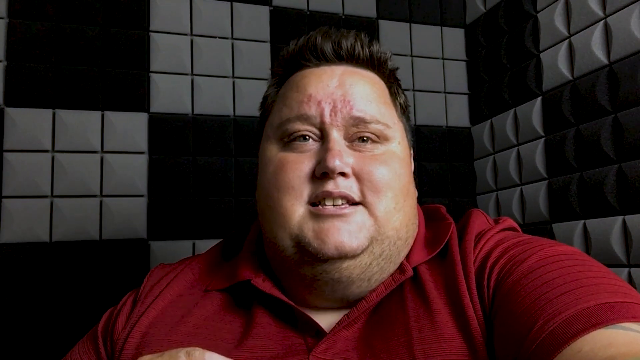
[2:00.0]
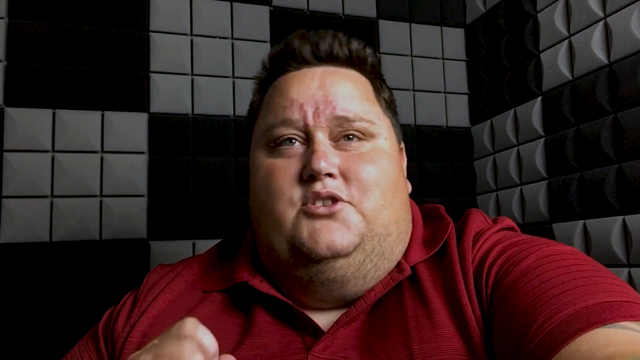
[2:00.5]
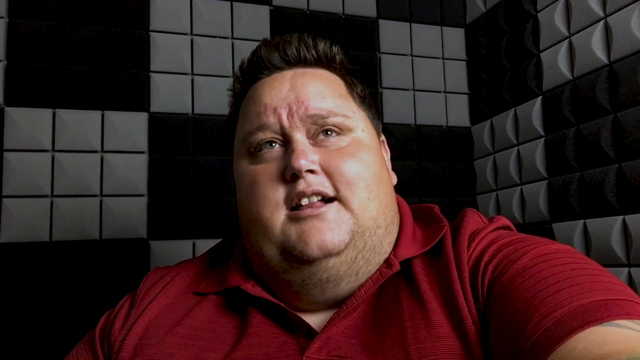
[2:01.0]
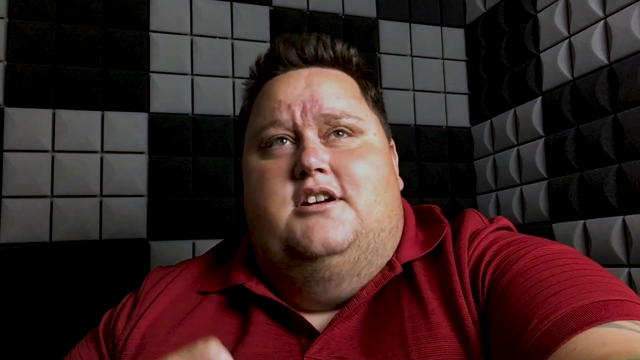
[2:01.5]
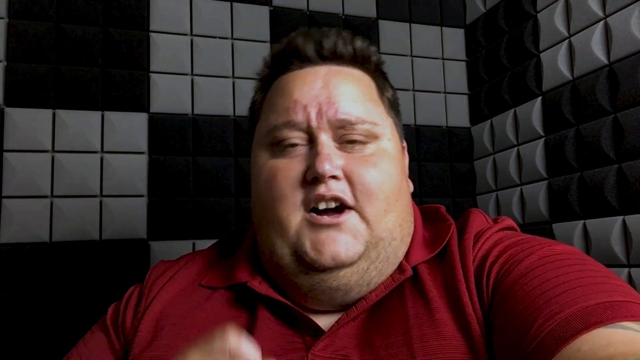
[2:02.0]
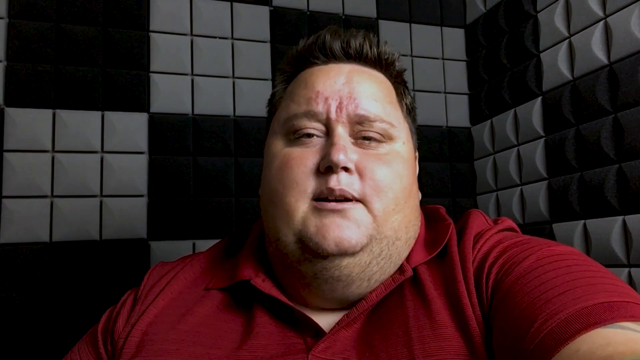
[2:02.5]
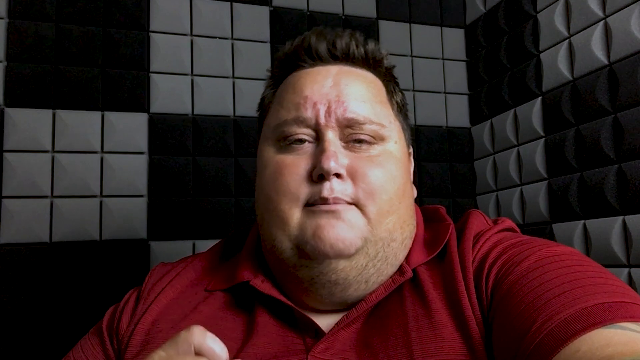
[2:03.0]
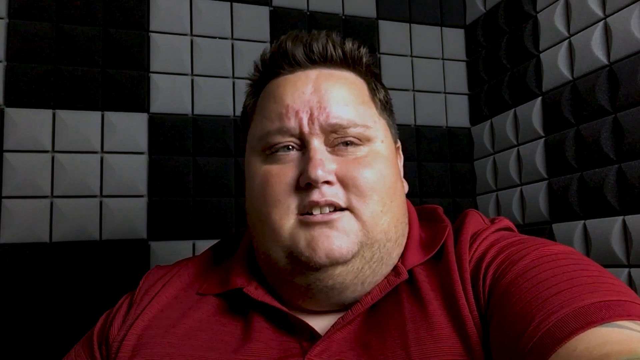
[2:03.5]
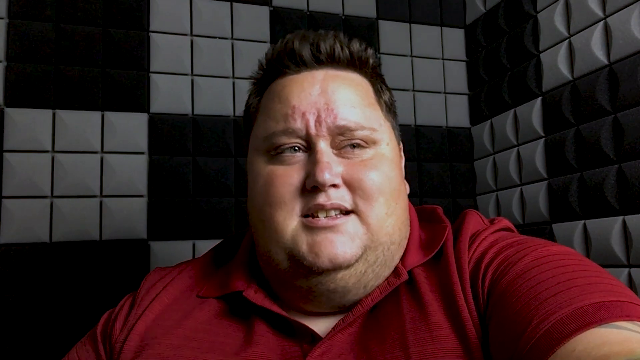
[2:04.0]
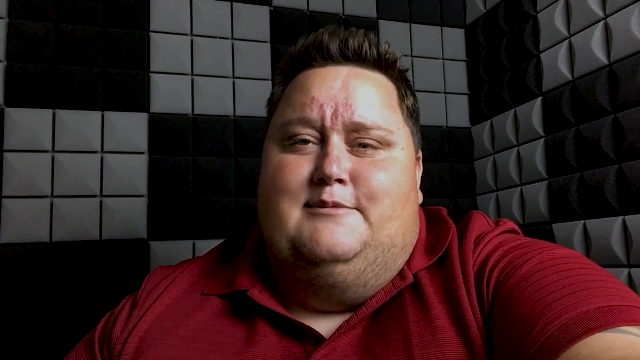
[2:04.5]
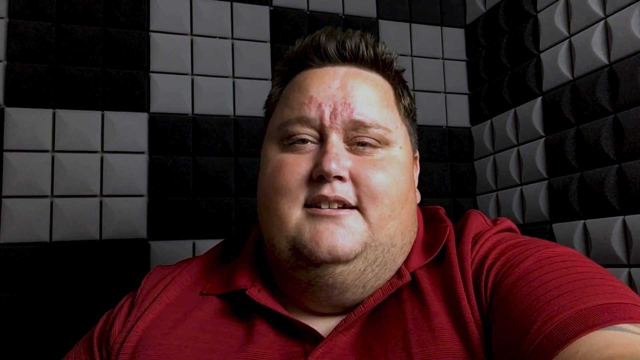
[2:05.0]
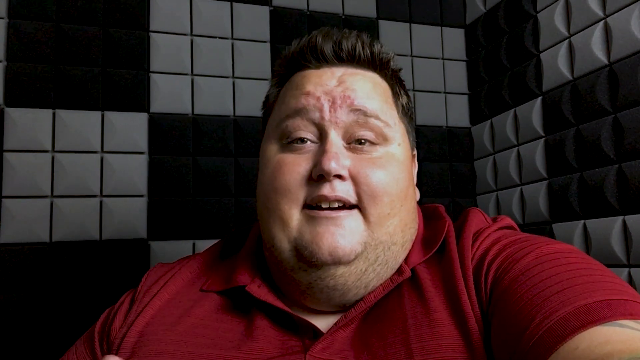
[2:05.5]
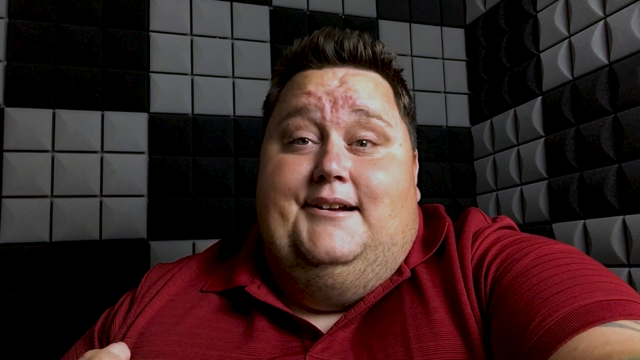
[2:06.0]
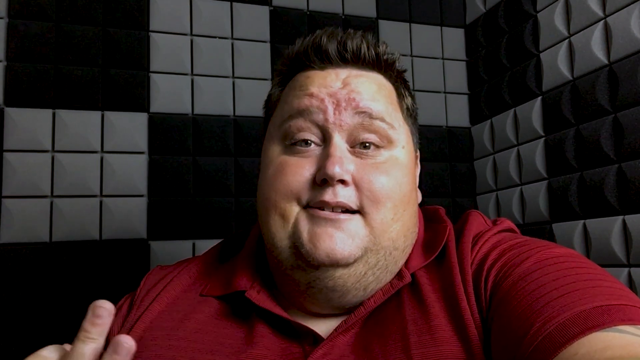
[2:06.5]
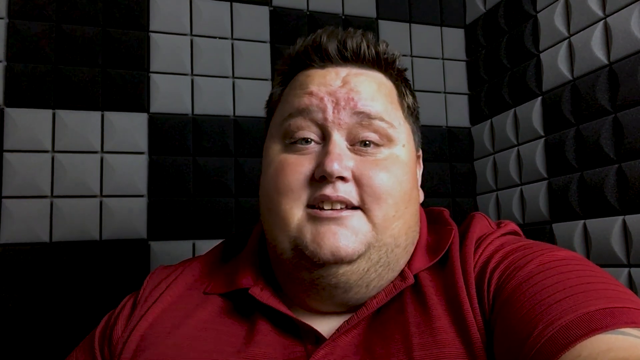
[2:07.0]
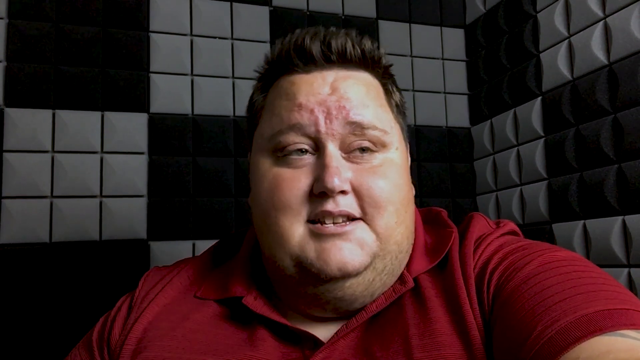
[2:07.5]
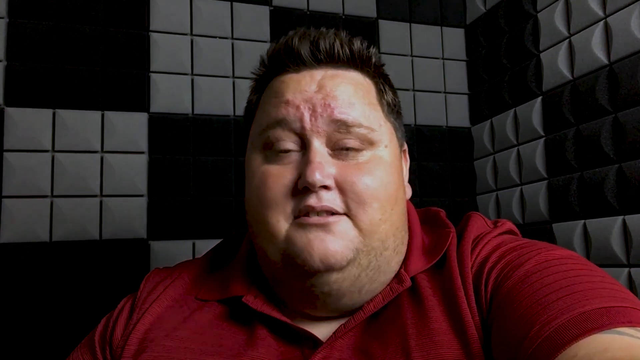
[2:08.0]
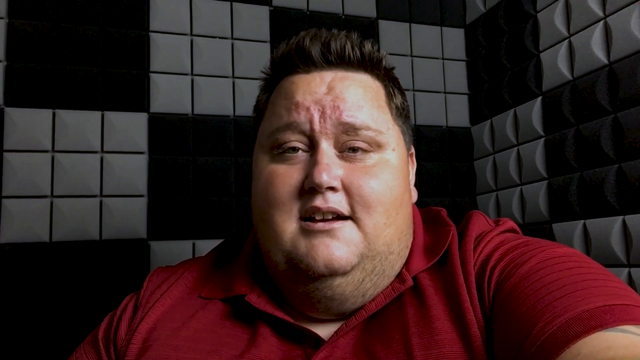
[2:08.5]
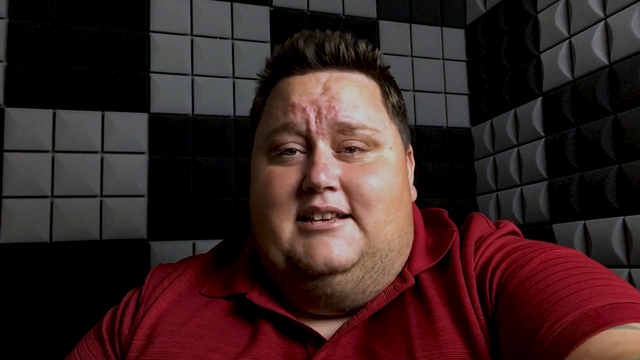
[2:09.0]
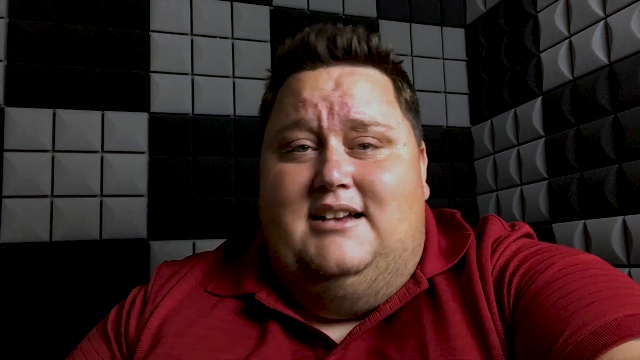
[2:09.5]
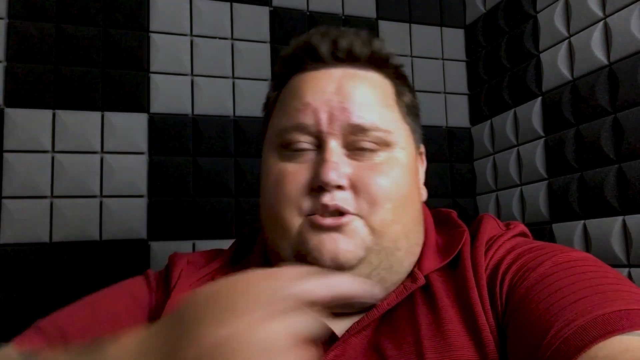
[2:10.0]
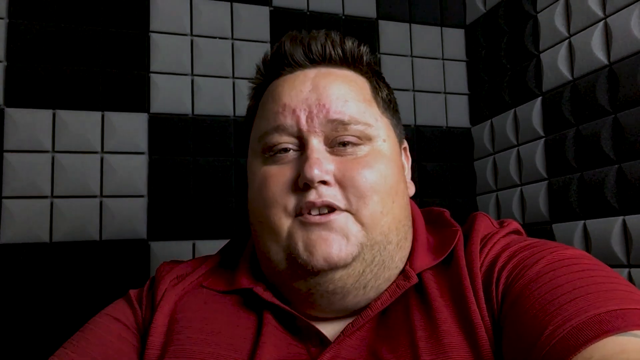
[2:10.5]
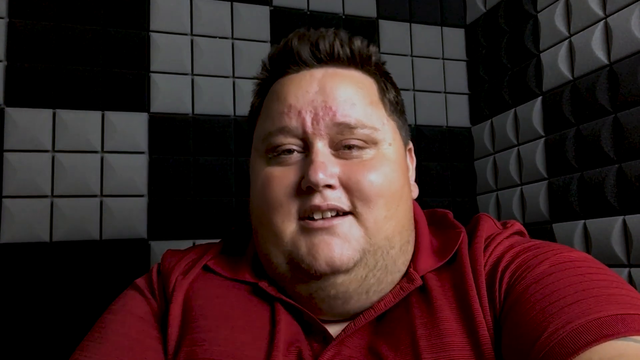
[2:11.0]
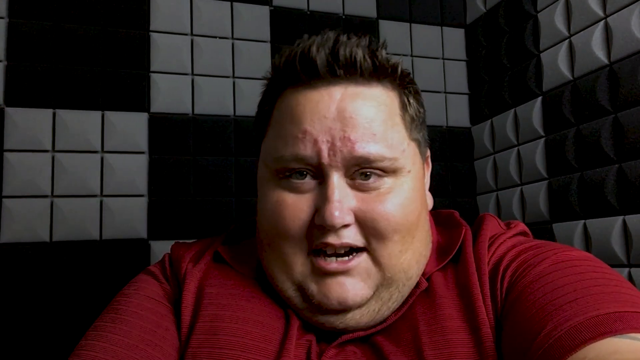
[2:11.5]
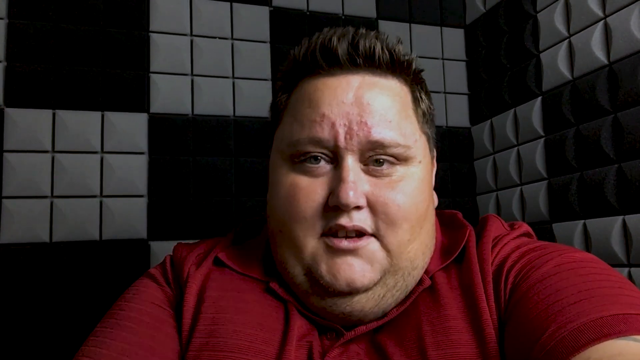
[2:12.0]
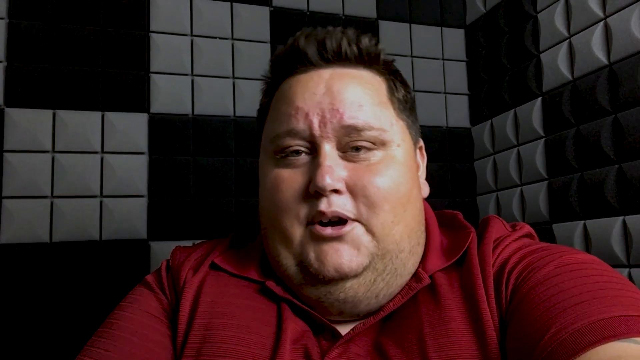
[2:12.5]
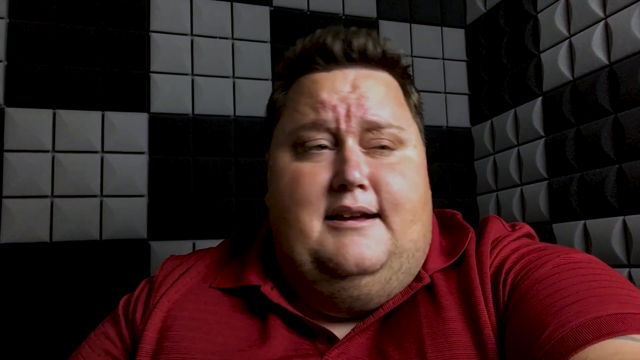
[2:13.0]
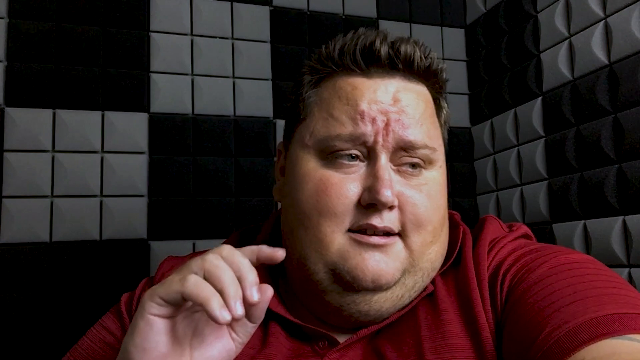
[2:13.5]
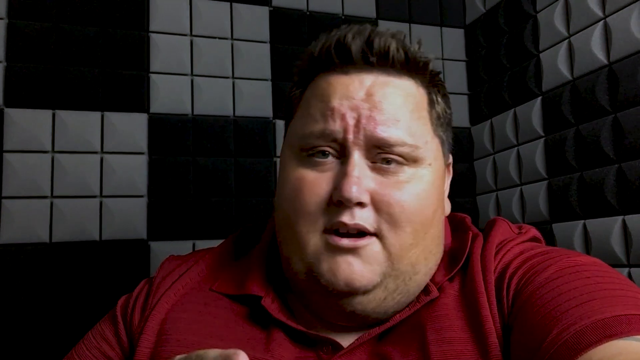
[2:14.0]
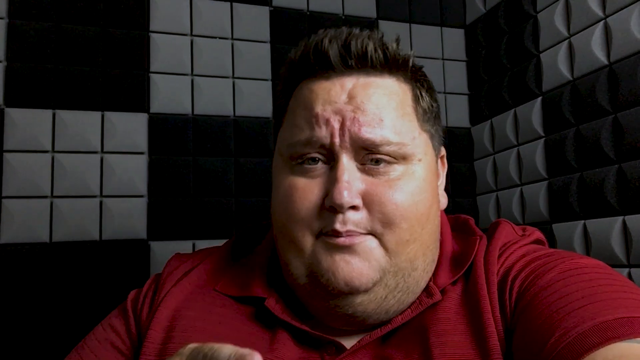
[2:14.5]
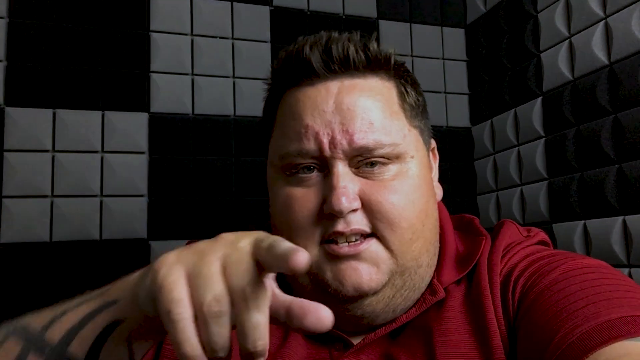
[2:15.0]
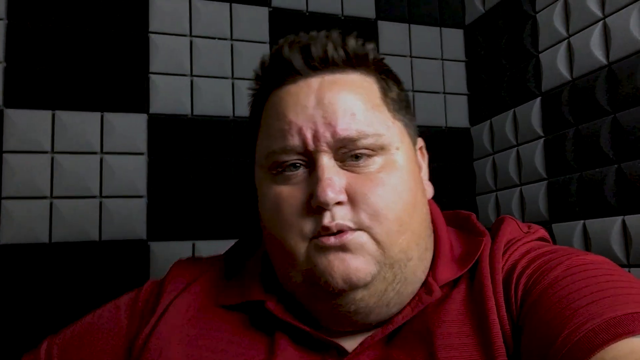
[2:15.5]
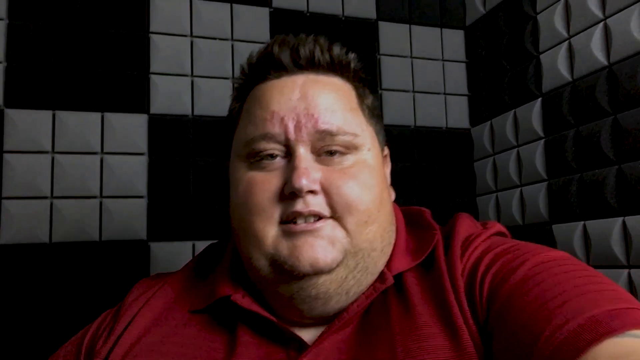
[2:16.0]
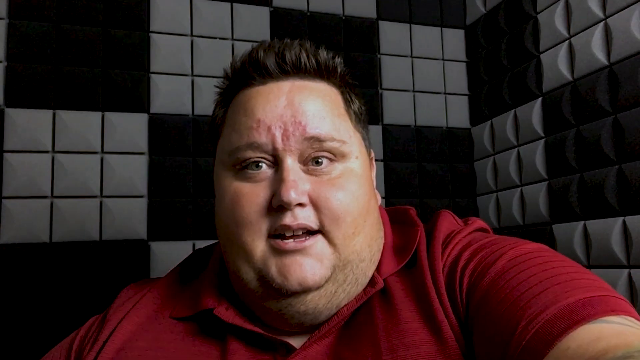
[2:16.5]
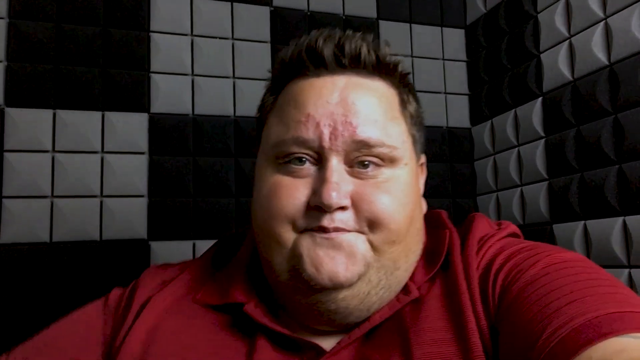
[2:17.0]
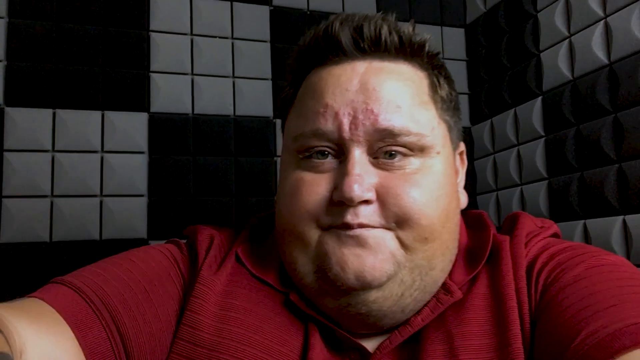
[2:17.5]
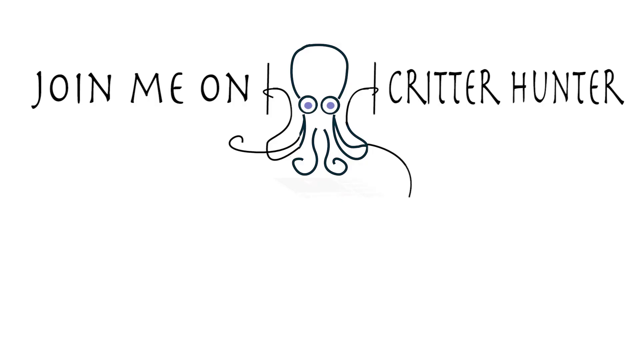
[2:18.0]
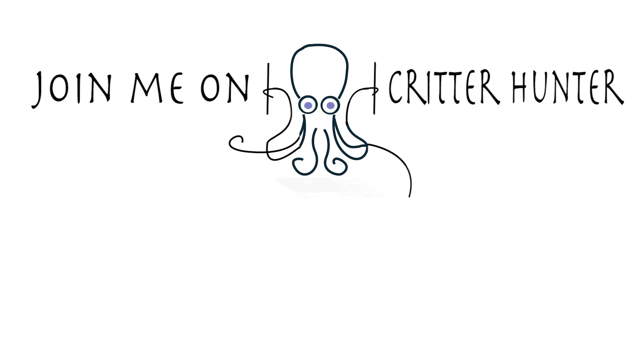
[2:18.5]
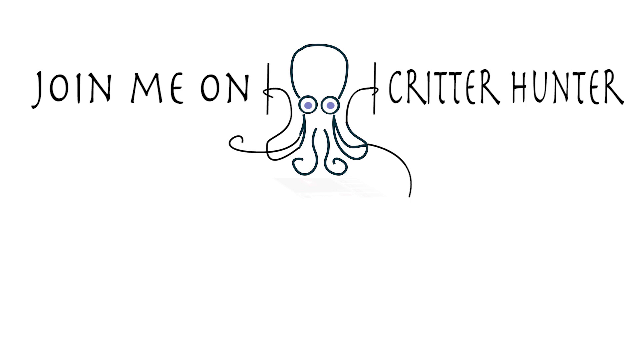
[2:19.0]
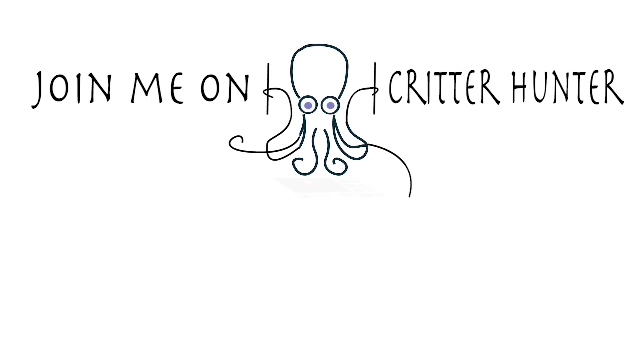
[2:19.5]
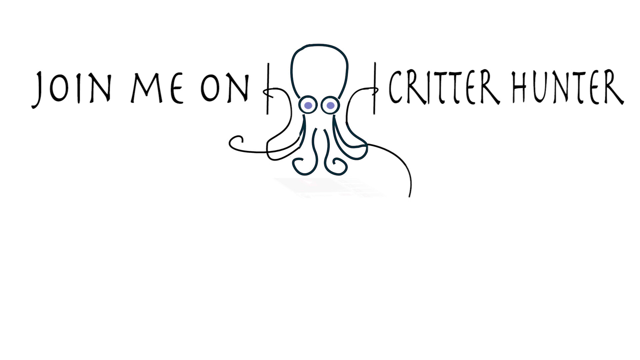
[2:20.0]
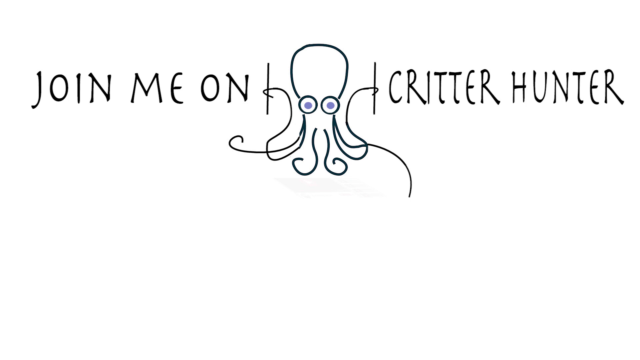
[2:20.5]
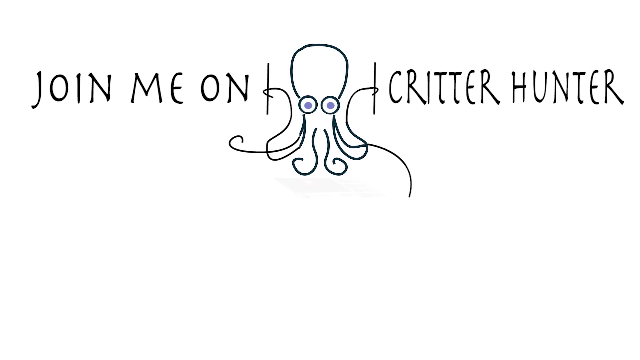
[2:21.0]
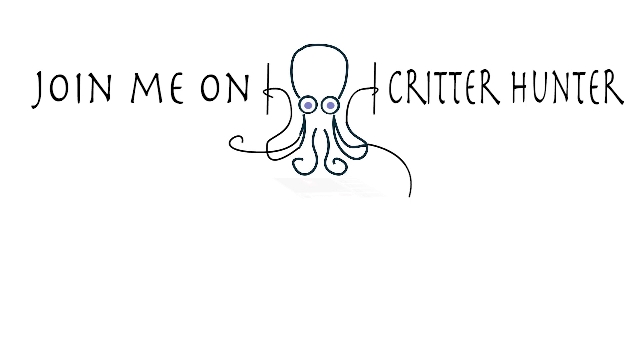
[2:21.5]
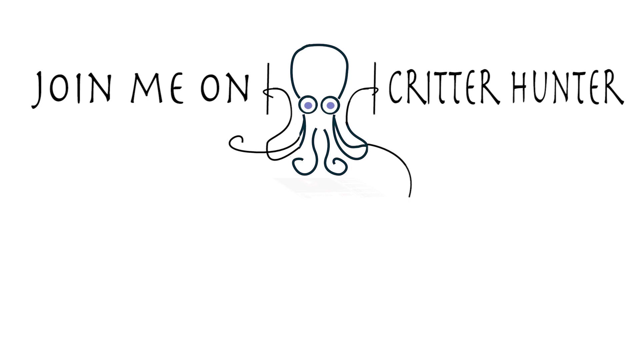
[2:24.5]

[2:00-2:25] The obese man is seated in a crumpled-looking red t-shirt, gesticulating with one hand. The background is a checkered pattern of big black and gray tiles, with each gray tile broken into 9 smaller gray tiles outlined in black lines. He looks disturbed as he moves his hand around, pointing at the screen menacingly, and then presses a button. The video transitions to text reading "join me on Critter Hunter". In between the text is a drawing of an octopus with a lilac eye and tentacles that look like lines; two of the tentacles hold onto a drawing that looks like a vertical line. Everything is drawn in black on a white background.